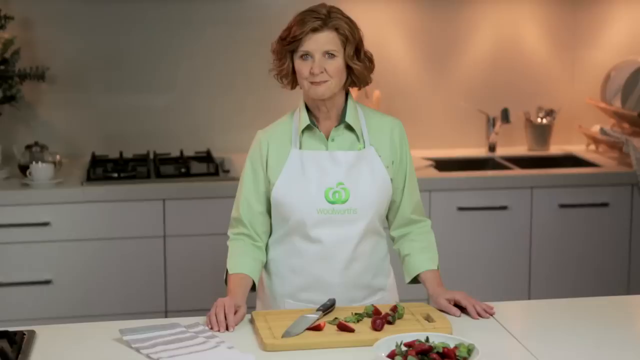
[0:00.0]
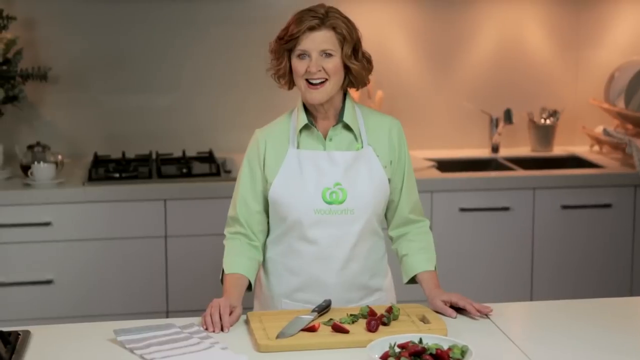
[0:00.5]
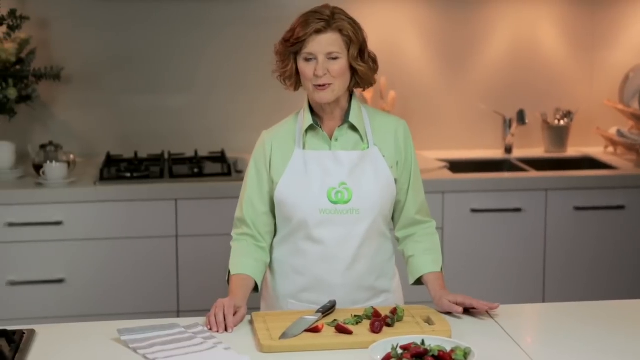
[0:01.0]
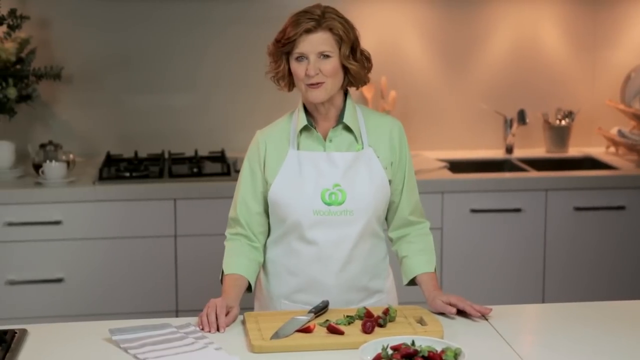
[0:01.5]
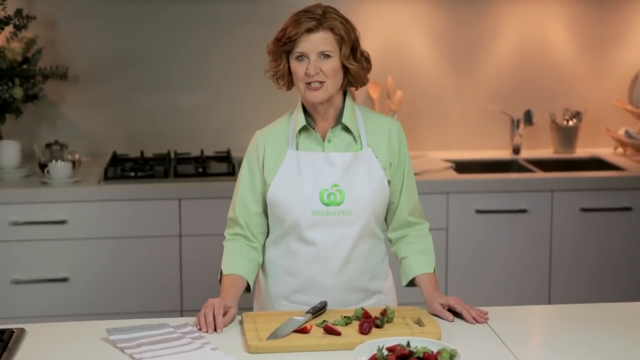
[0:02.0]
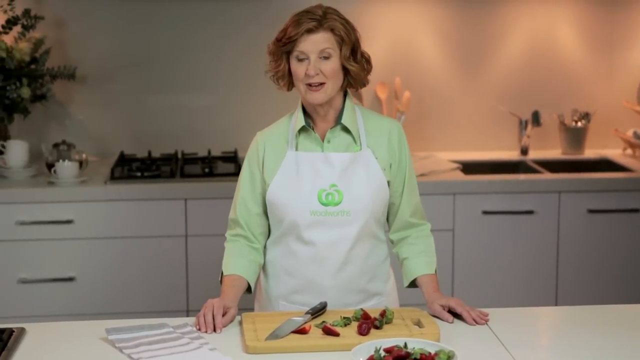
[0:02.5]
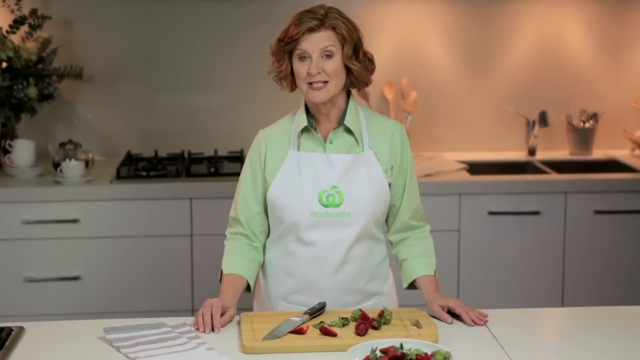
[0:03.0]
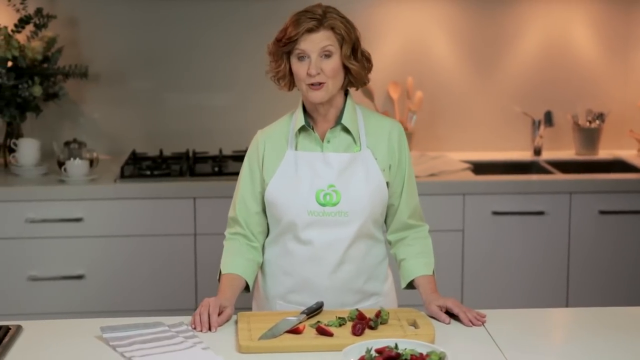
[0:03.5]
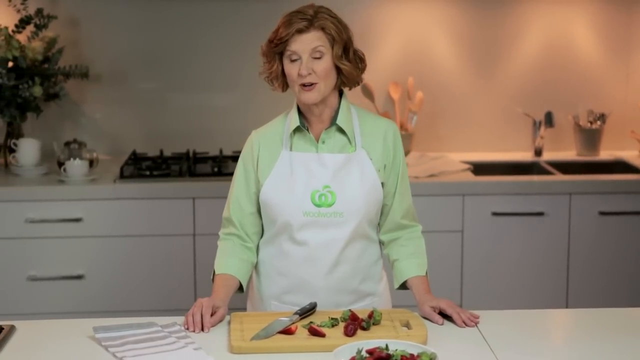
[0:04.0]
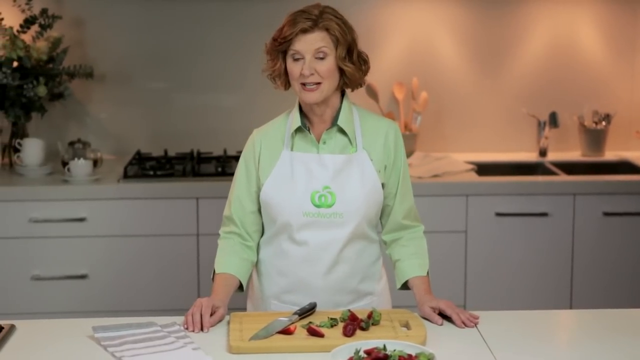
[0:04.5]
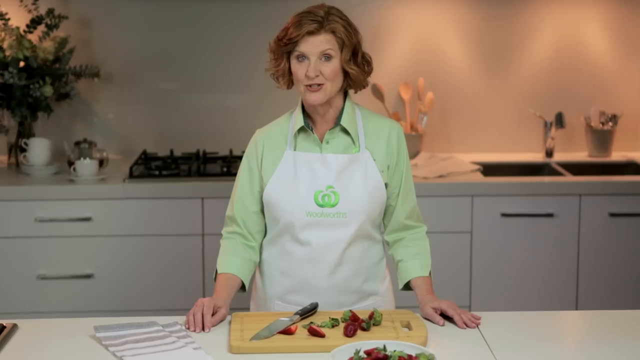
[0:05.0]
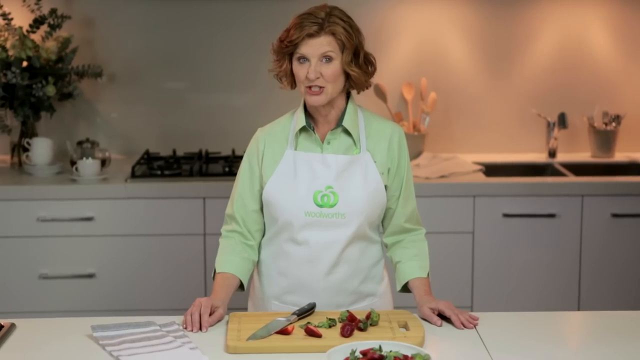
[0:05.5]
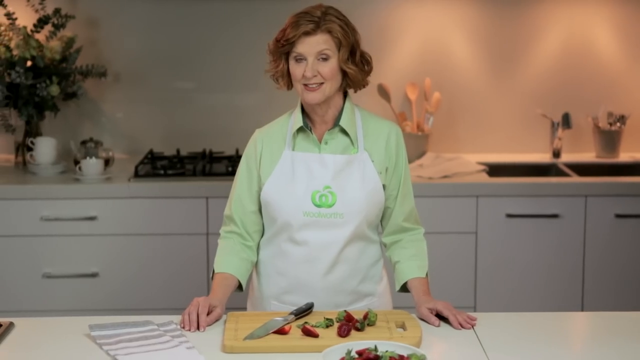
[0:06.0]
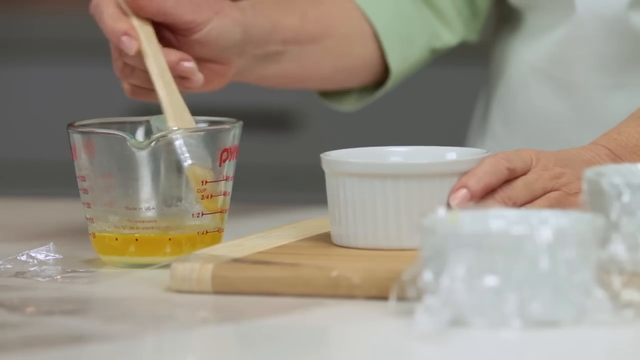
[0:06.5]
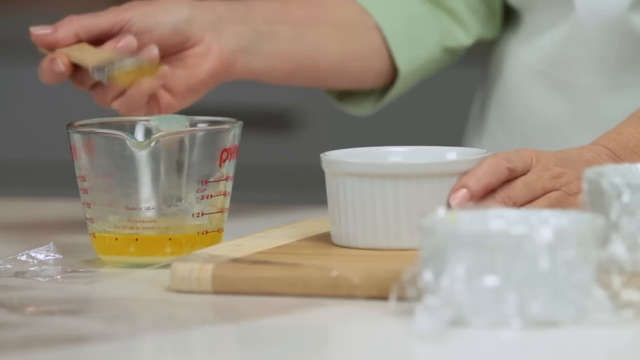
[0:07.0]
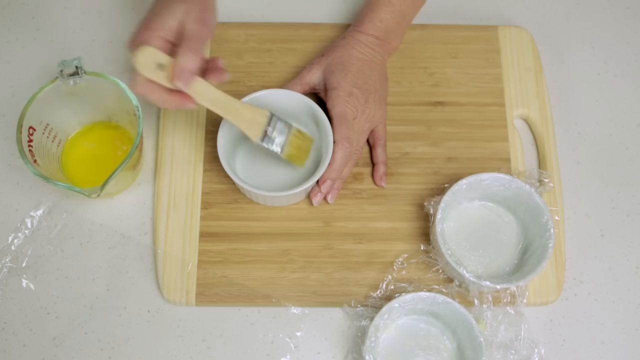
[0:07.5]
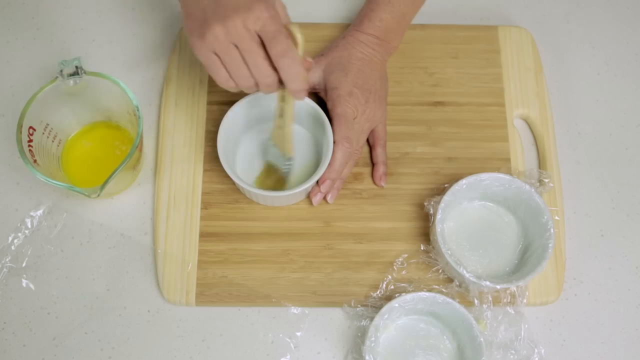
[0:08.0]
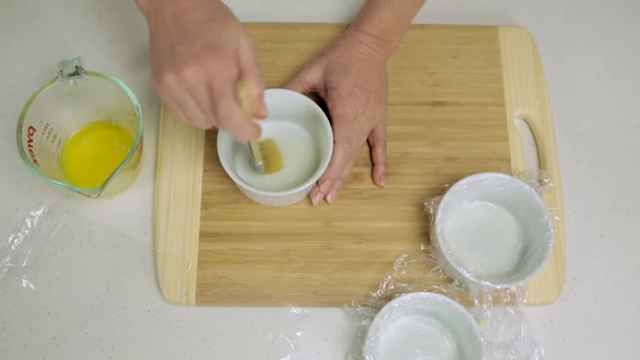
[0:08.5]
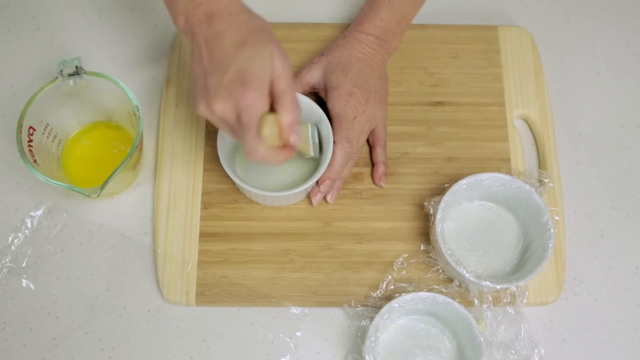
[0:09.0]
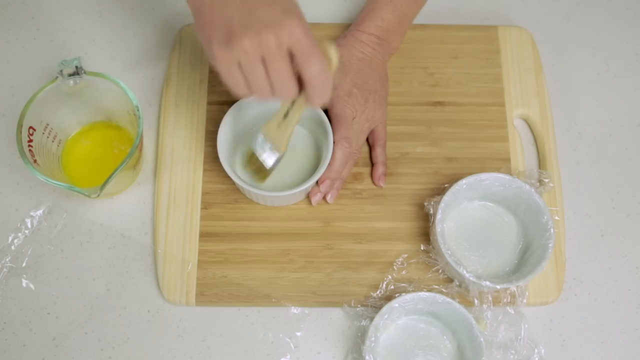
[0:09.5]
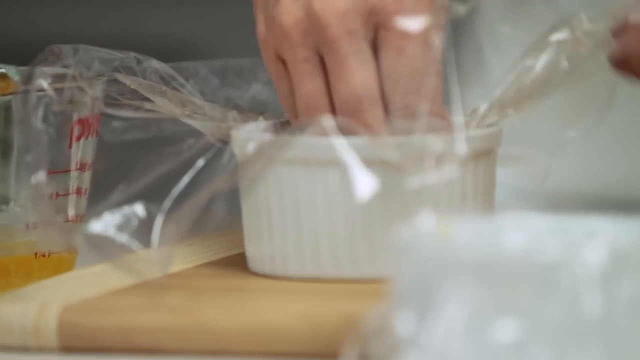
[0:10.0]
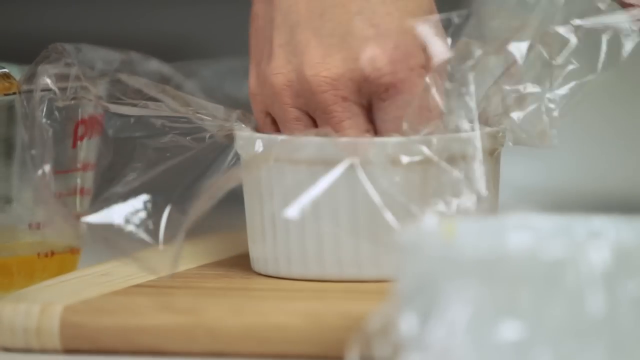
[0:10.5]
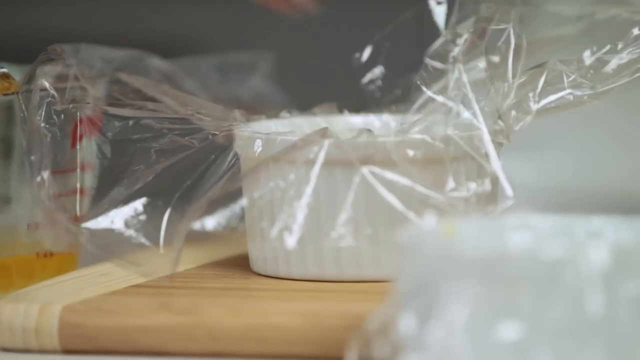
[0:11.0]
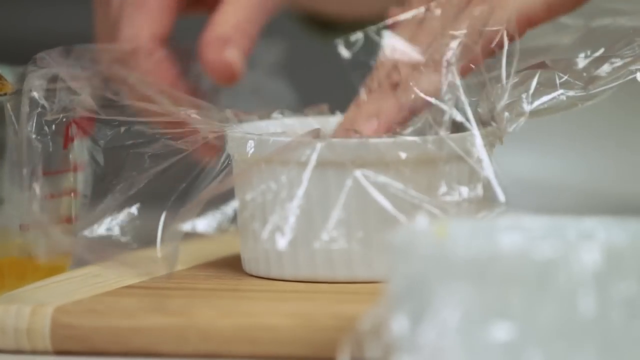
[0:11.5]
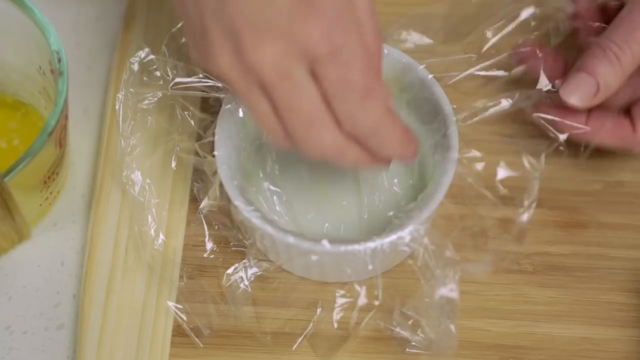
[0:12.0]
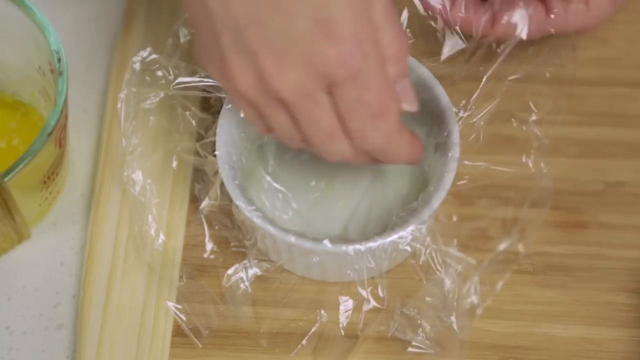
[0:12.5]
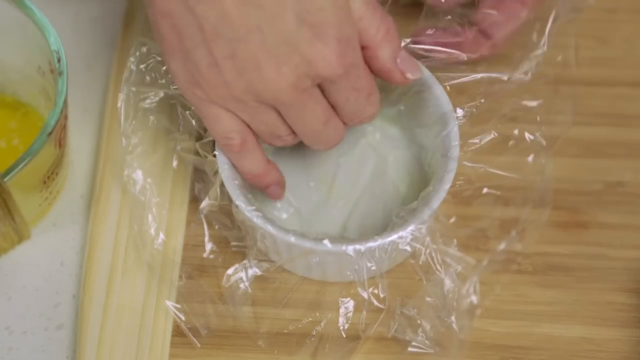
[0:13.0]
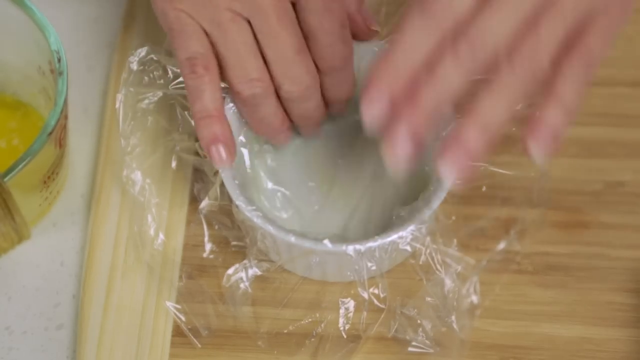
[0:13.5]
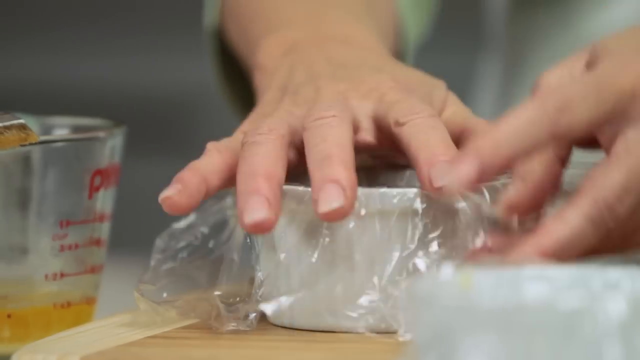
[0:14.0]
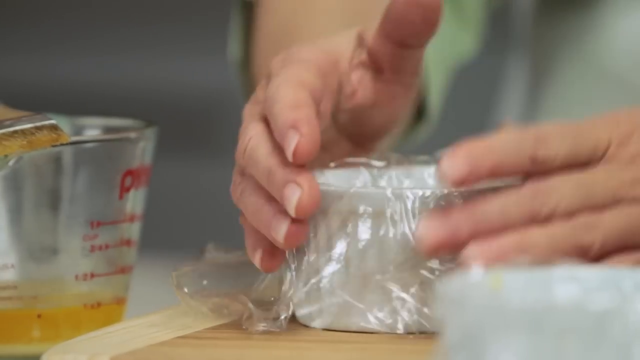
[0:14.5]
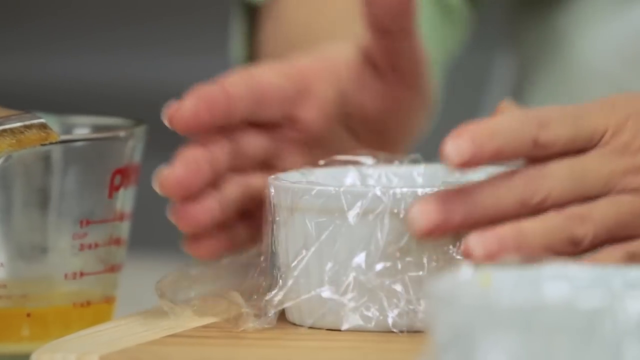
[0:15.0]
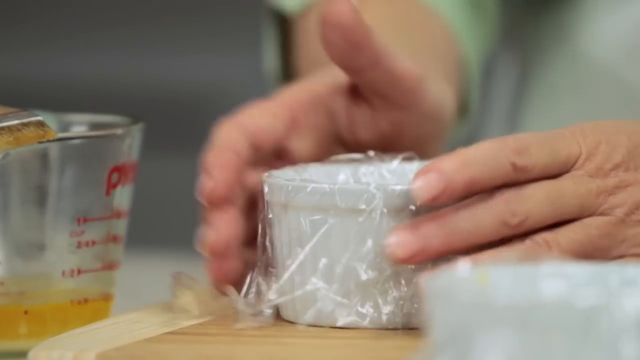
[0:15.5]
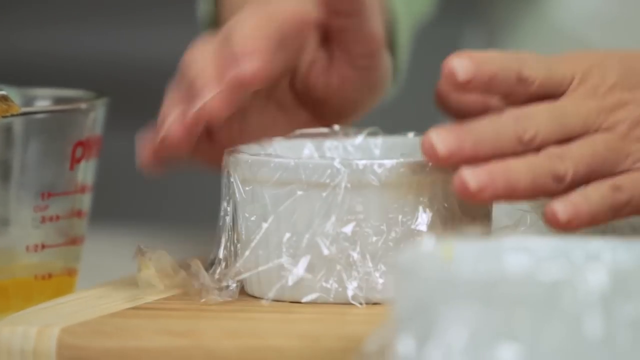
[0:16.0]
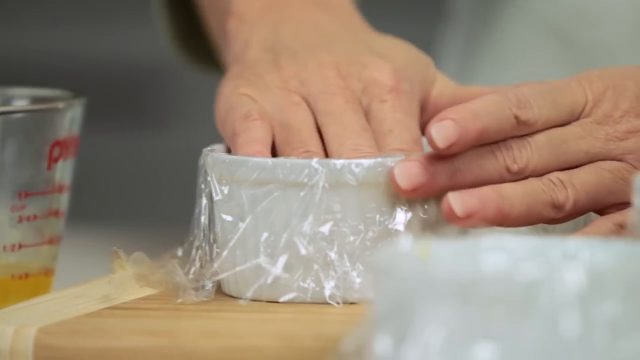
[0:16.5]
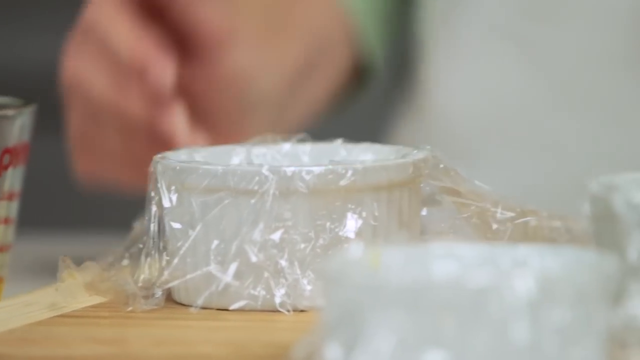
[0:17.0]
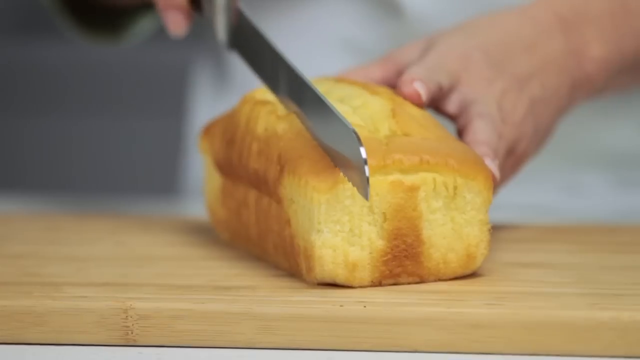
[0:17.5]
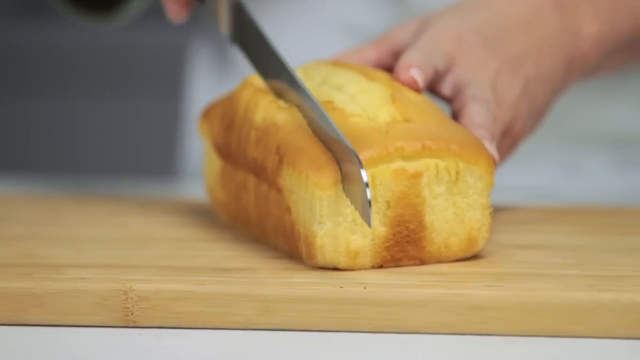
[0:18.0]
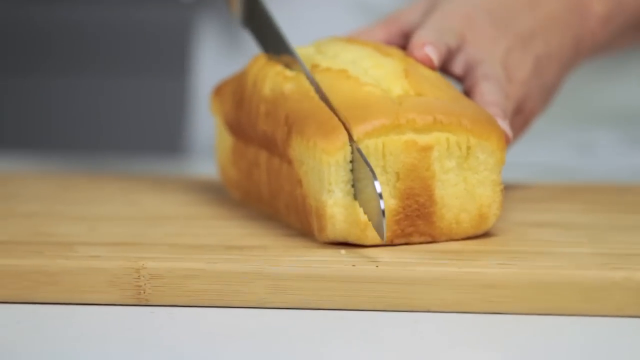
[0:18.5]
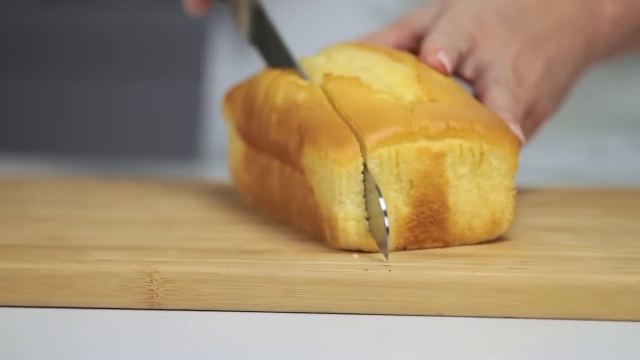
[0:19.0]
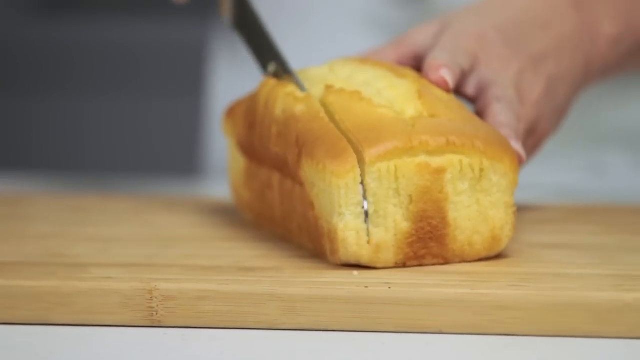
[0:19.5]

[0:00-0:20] A woman stands in a kitchen wearing a white apron with a green logo on it and a green blouse. In front of her is a cutting board with a knife on it. The video cuts to the person holding a brush in her right hand; she seems to be getting oil from what looks like a glass measuring cup. She then holds a ramekin in her left hand and seems to brush oil all over it. Next she takes some saran wrap and puts it over the ramekin. She then holds a serrated knife in her right hand and a loaf of bread in her left, cutting slices of the bread, which fall onto the wooden cutting board.